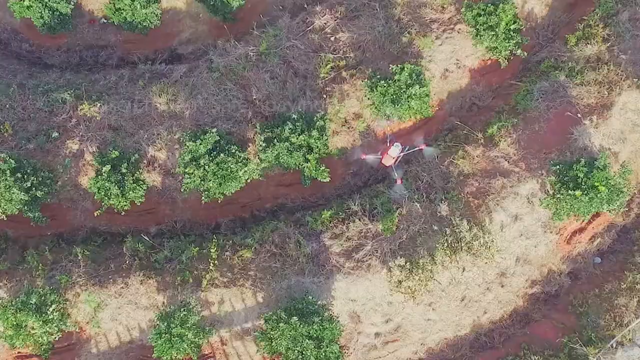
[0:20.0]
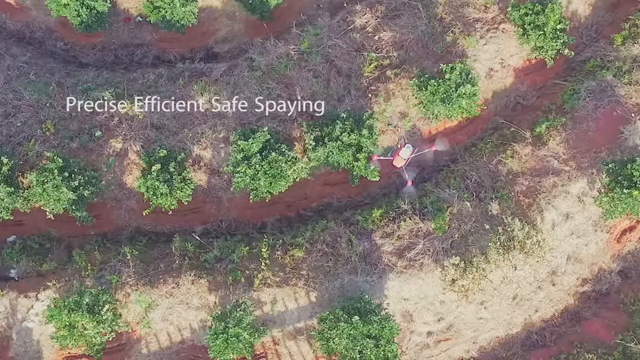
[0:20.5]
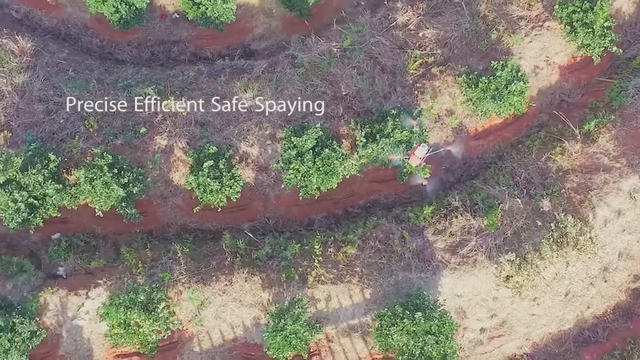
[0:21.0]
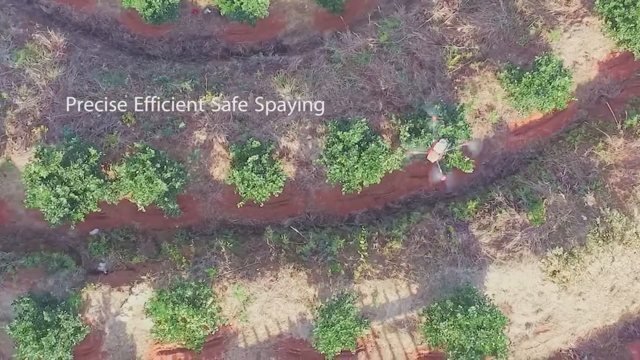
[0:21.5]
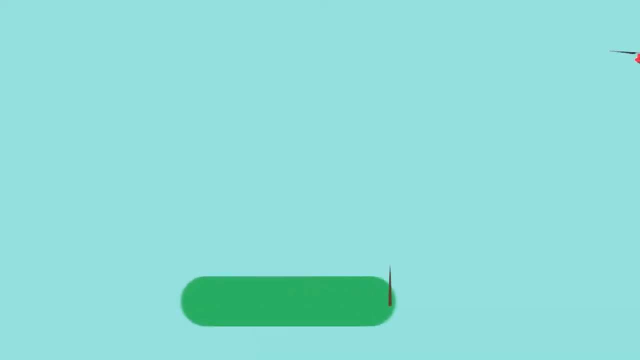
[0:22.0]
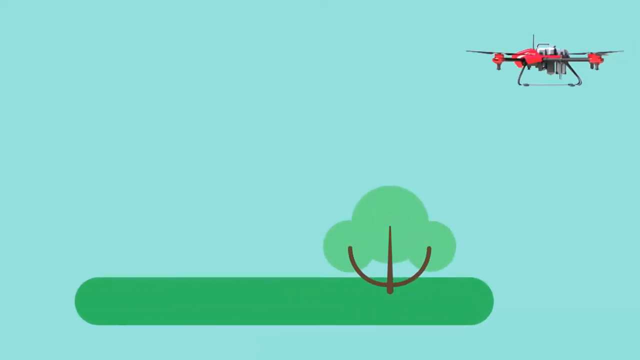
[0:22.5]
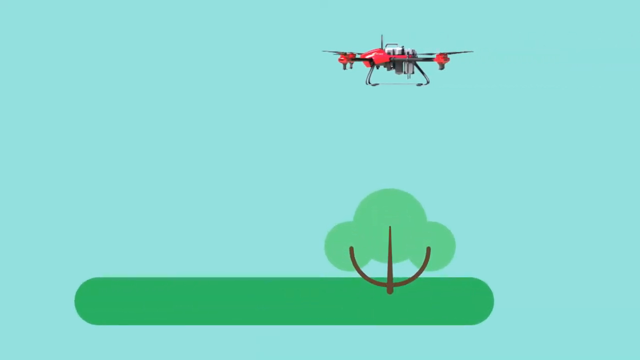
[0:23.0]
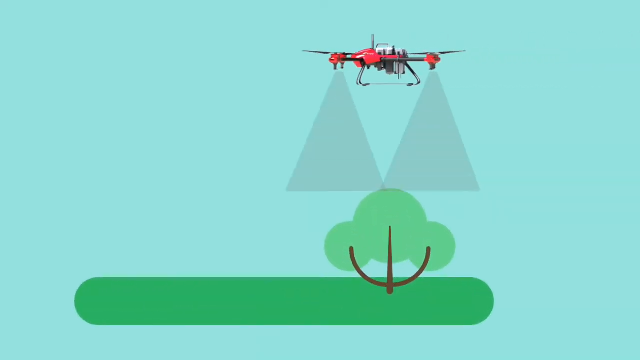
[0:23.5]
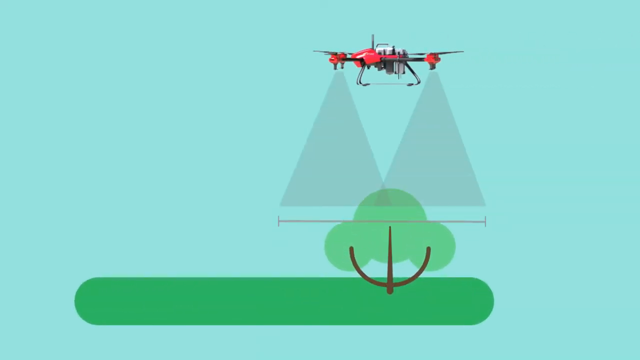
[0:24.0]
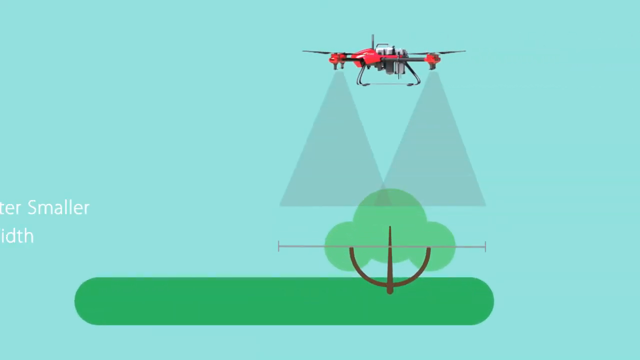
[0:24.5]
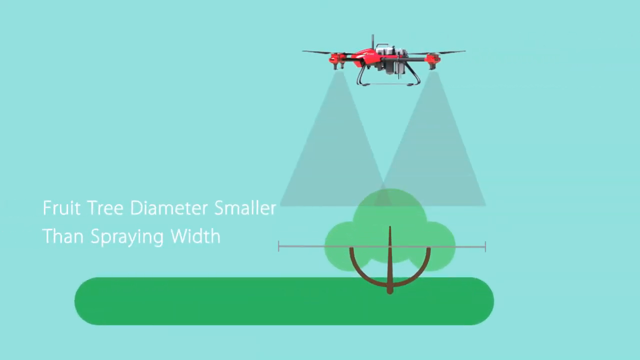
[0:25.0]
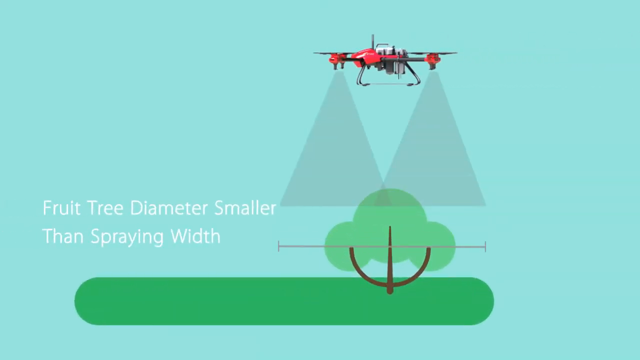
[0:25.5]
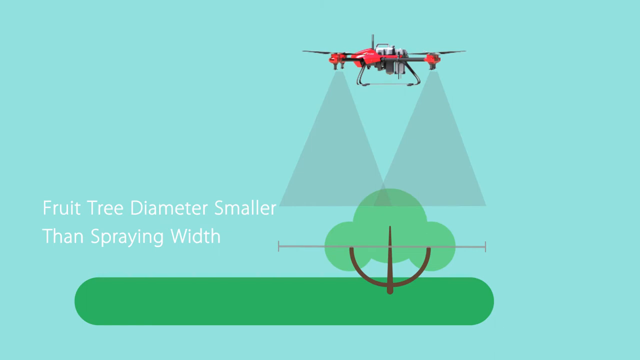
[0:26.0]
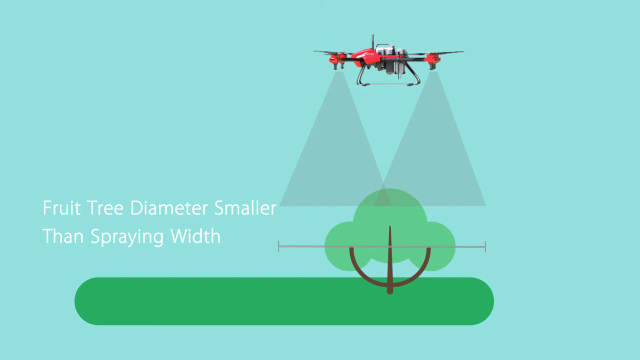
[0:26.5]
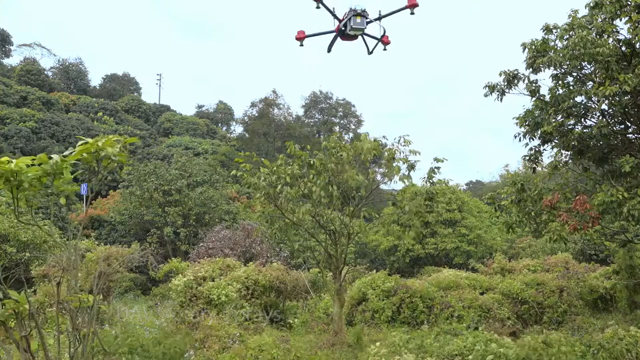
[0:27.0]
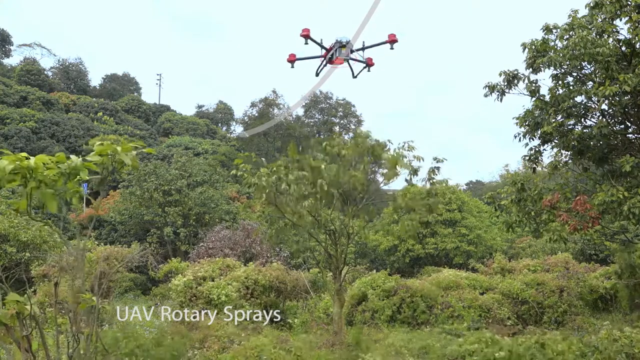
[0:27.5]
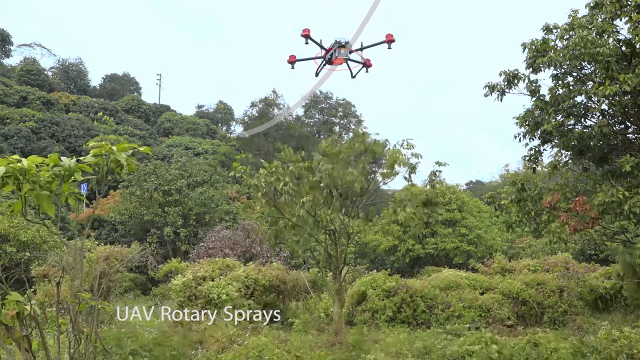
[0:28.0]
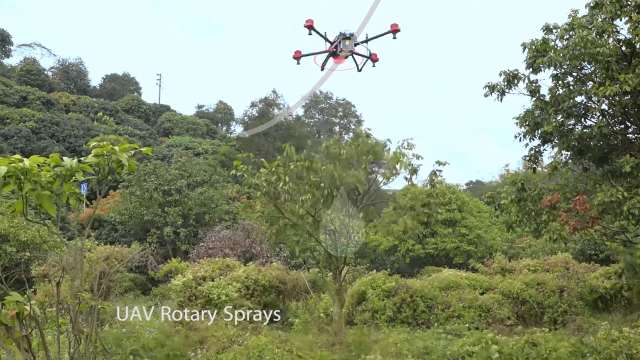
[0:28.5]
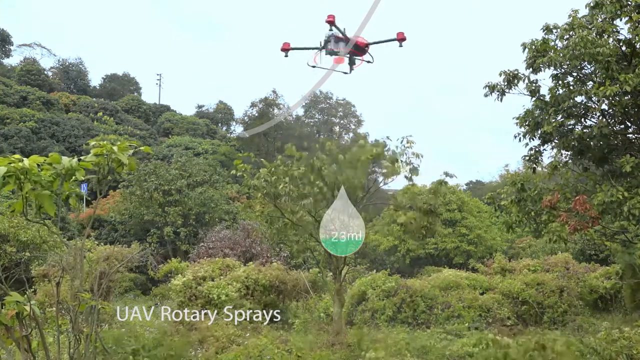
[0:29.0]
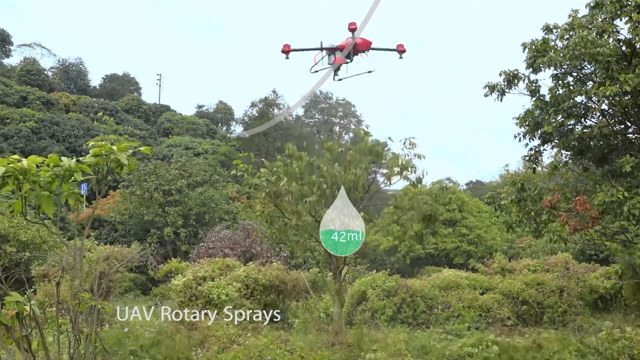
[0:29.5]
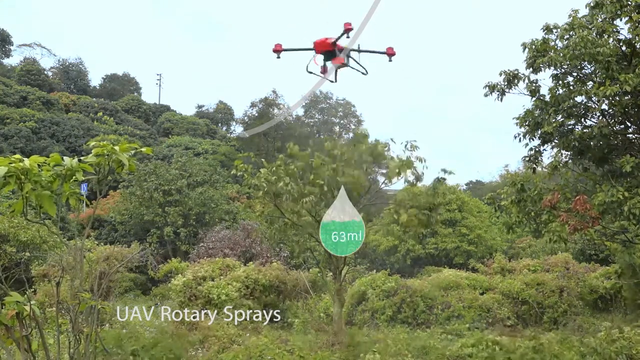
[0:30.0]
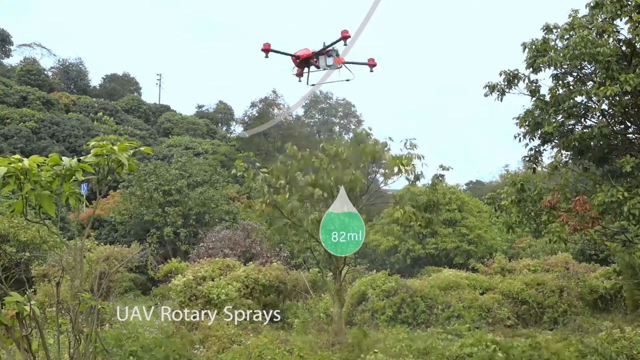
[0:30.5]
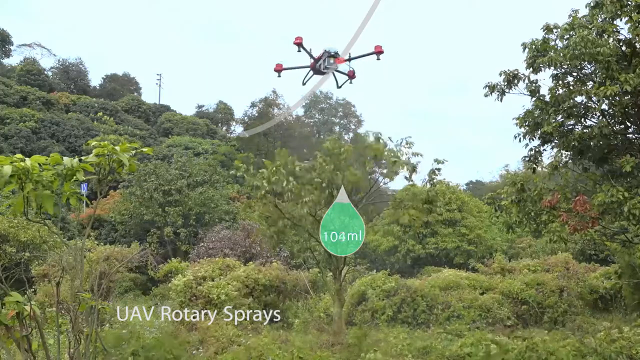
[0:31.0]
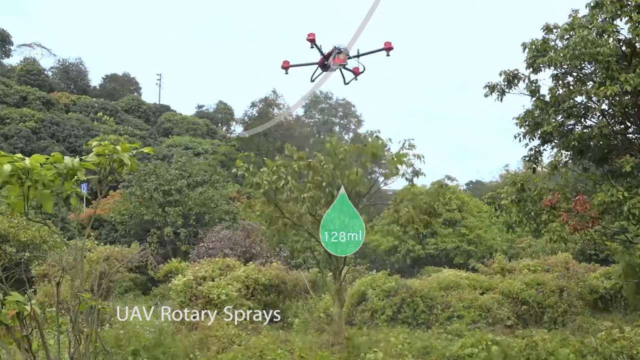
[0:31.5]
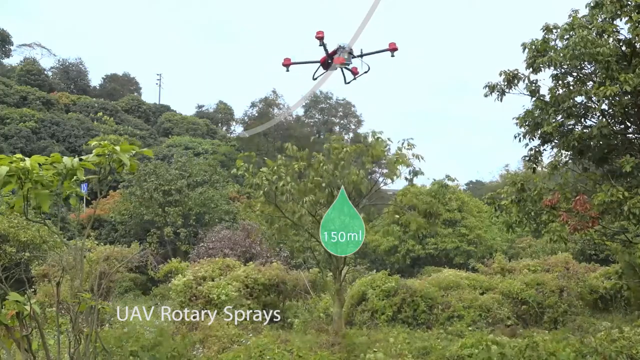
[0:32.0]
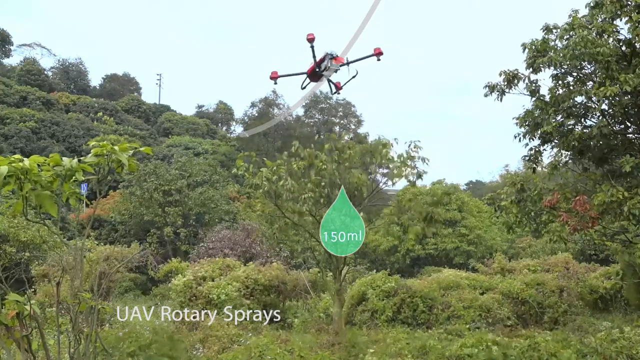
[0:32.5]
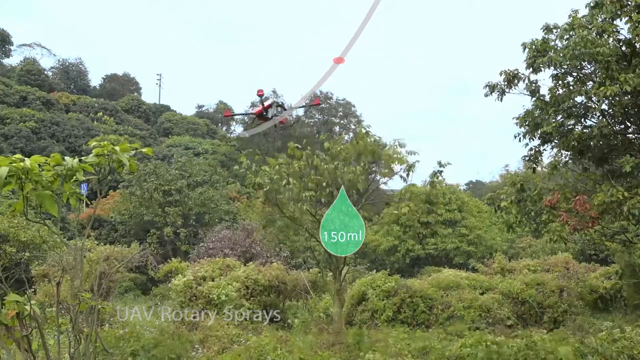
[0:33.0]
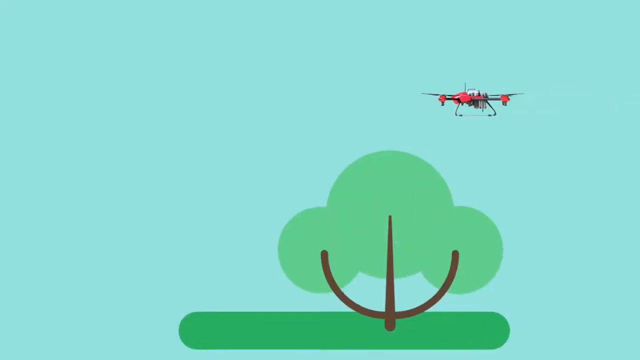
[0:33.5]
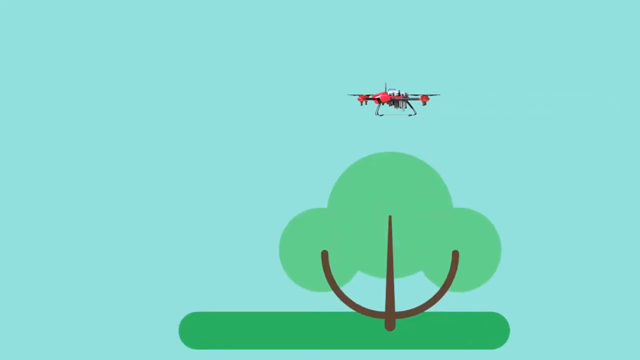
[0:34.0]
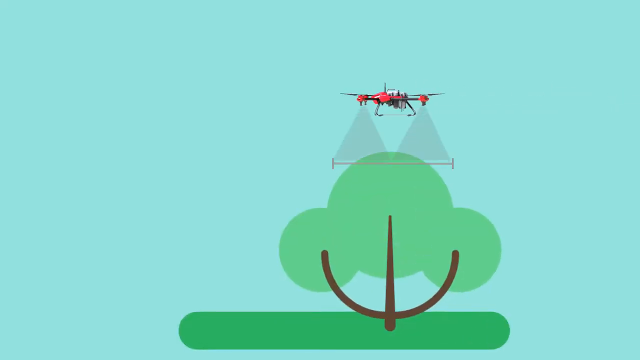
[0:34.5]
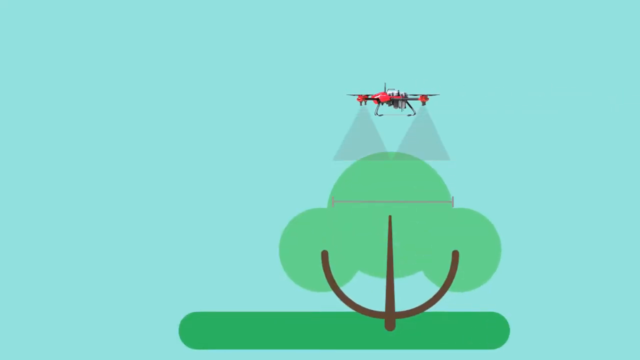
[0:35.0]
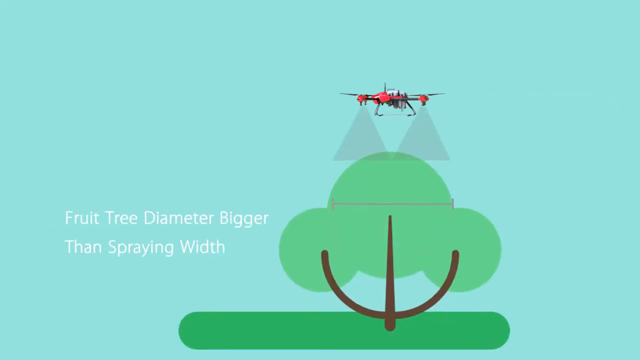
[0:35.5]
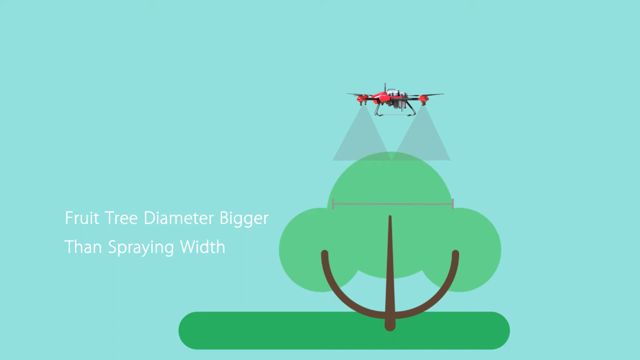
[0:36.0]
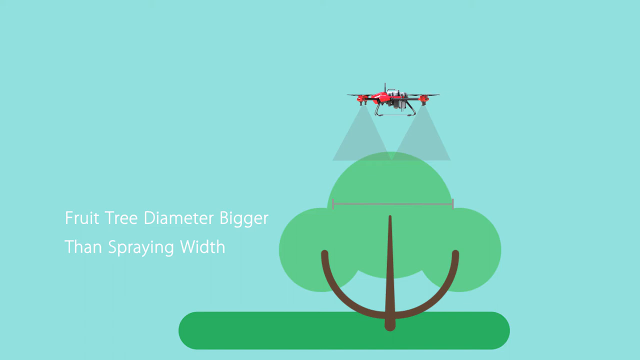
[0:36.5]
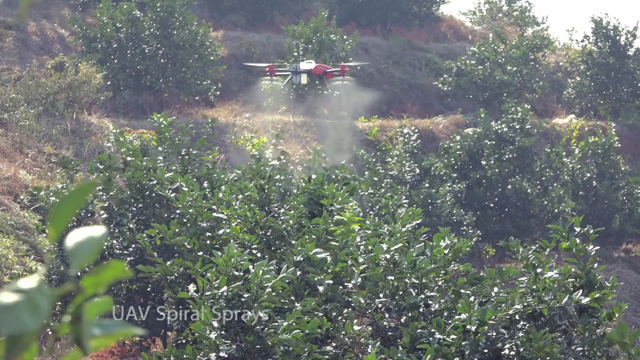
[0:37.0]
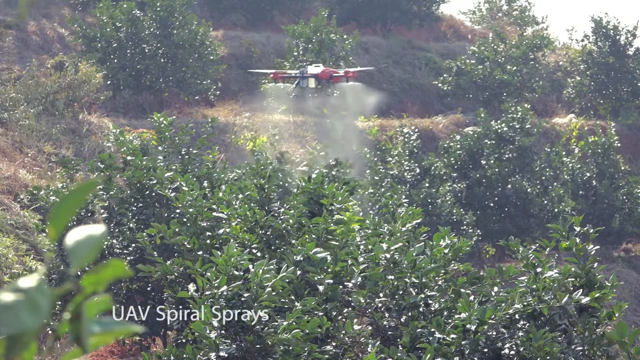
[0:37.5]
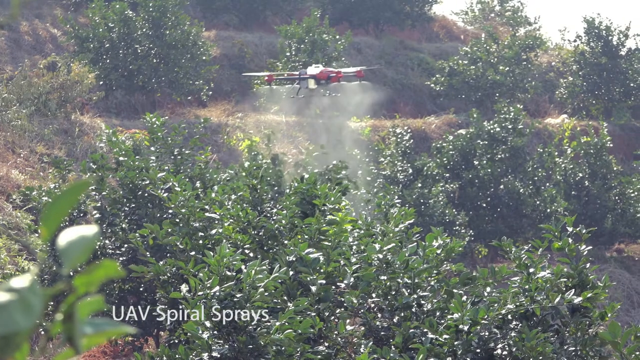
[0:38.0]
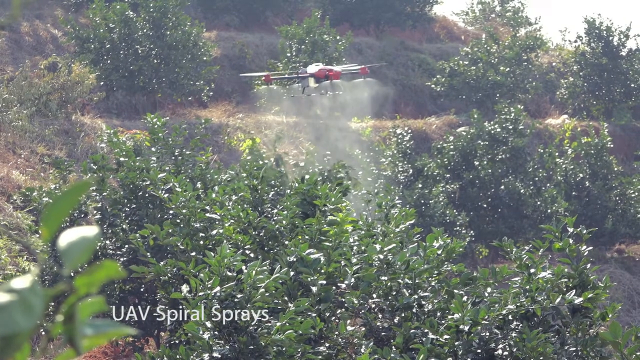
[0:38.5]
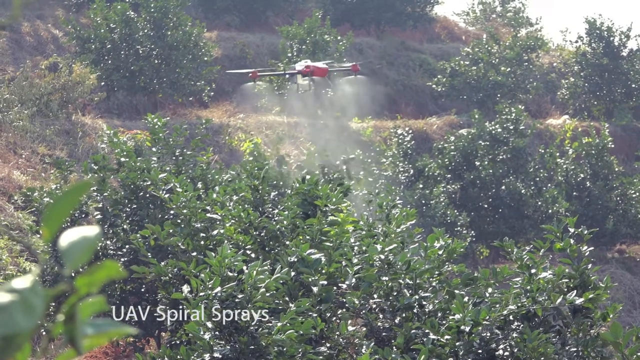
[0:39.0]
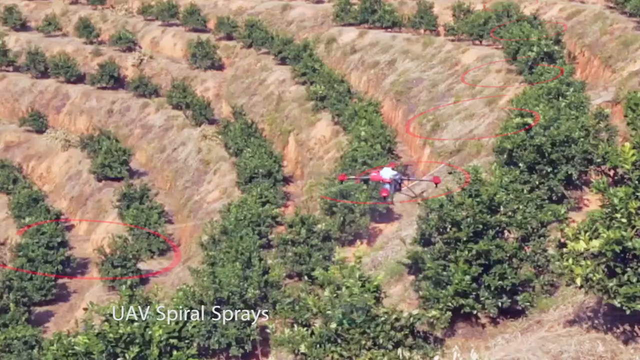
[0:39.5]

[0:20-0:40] The overhead view of the terraced hills is now very zoomed in. On the right side of the screen is a drone with four arms and spinning blades at the ends of all four. On the left side is the text "precise. Efficient, safe spraying." The video transitions to a computer graphic with a blue background. At the bottom, a green ground with a stick figure tree is drawn, and above it is an image of a red drone. The graphic draws two cones coming out from each side of the drone, going down to the tree. On the left side it says "fruit tree diameter smaller than spraying width," and a line is drawn across the tree. The video transitions back to real footage of a drone flying above a small tree and appearing to spray it. At the bottom it says "UAV rotary sprays," and a water icon is displayed over the tree being sprayed. The limbs of the tree shake back and forth in response to the spray. The drone begins to fly off towards the background. The video cuts back to the computer graphics, showing a drone spraying another, larger stick figure tree. It then cuts back to the real drone spraying another group of bushes, with "UAV spiral sprays" at the bottom. The drone spins around as it sprays the bushes.